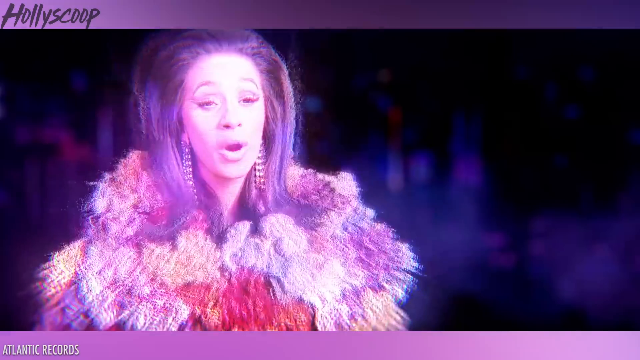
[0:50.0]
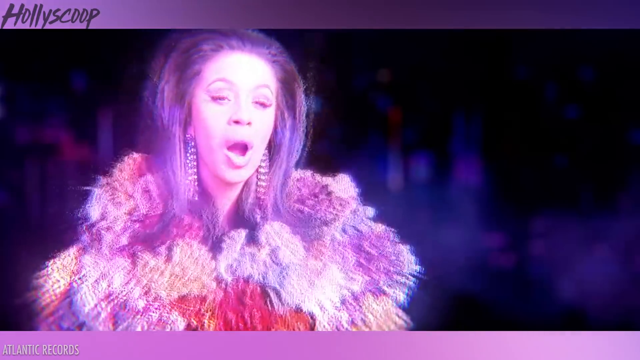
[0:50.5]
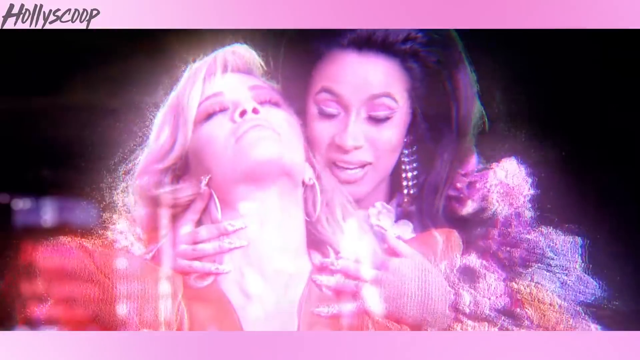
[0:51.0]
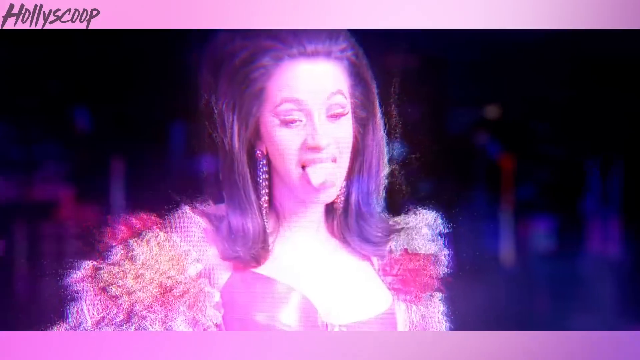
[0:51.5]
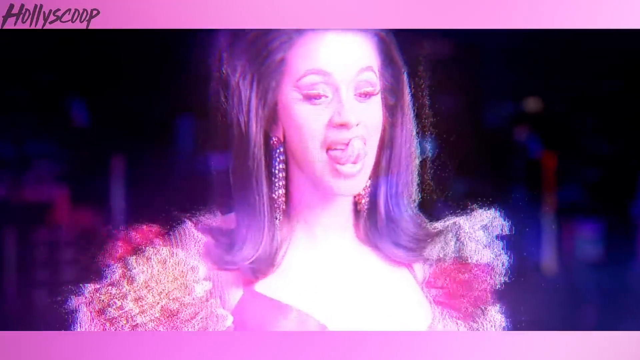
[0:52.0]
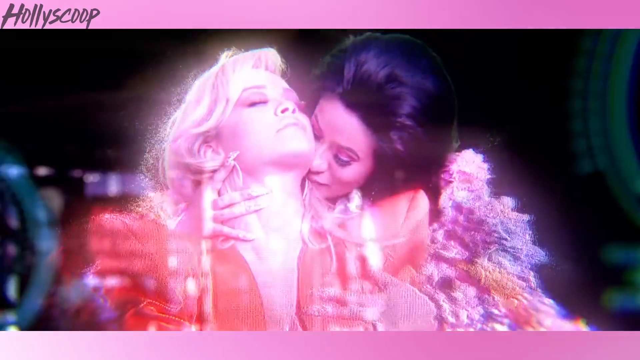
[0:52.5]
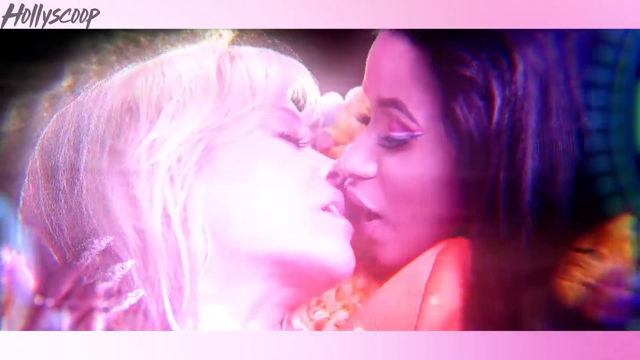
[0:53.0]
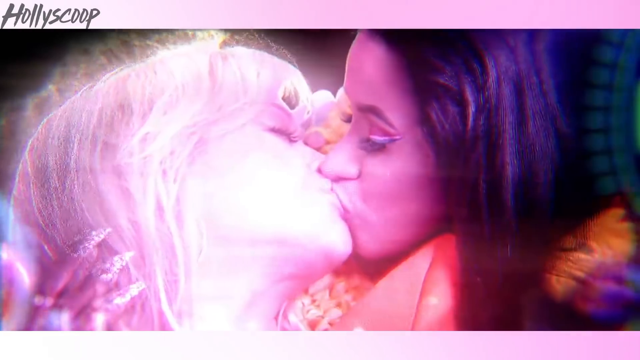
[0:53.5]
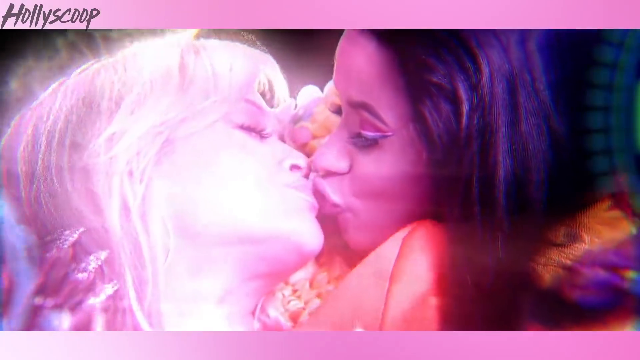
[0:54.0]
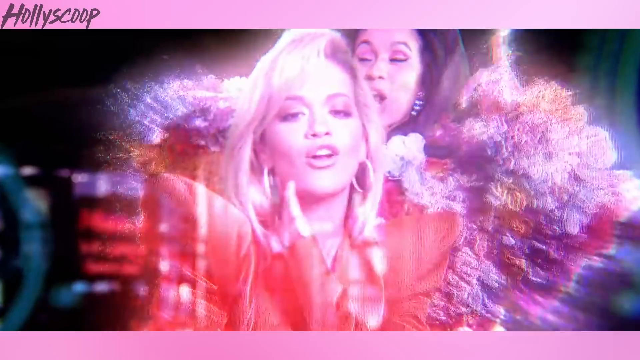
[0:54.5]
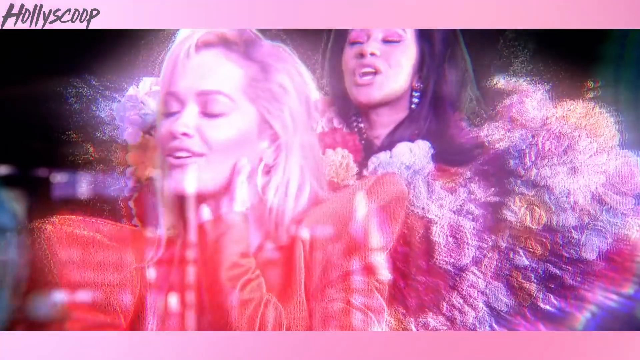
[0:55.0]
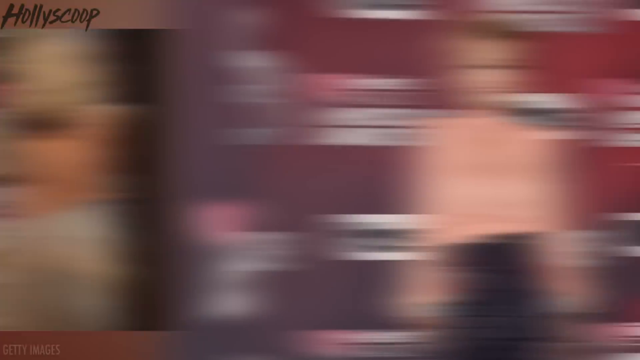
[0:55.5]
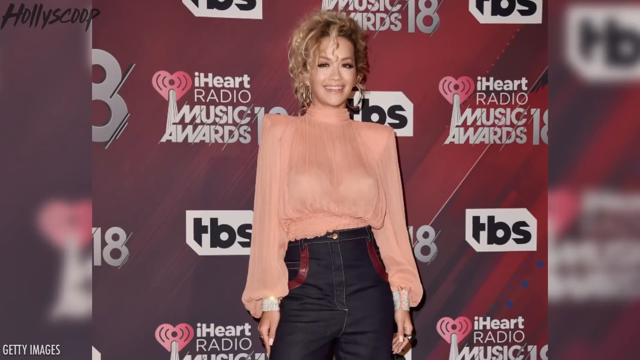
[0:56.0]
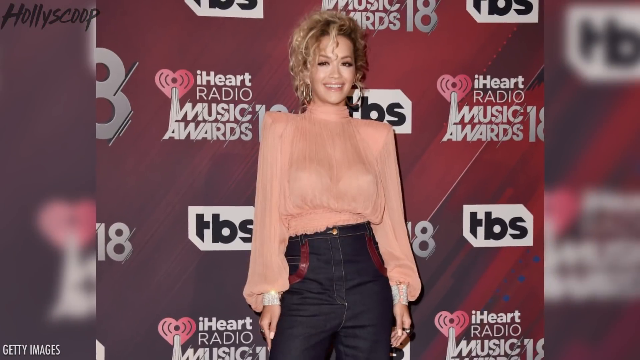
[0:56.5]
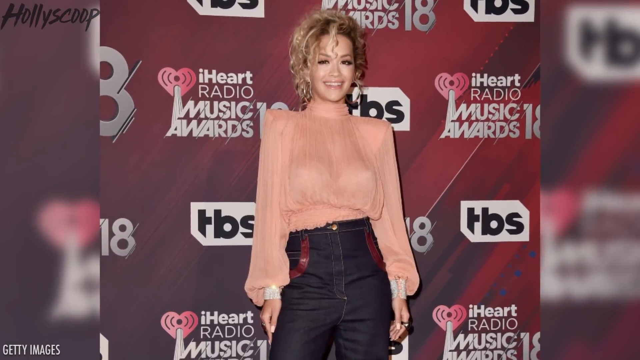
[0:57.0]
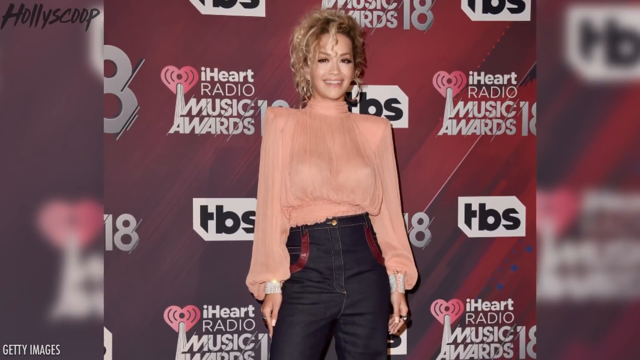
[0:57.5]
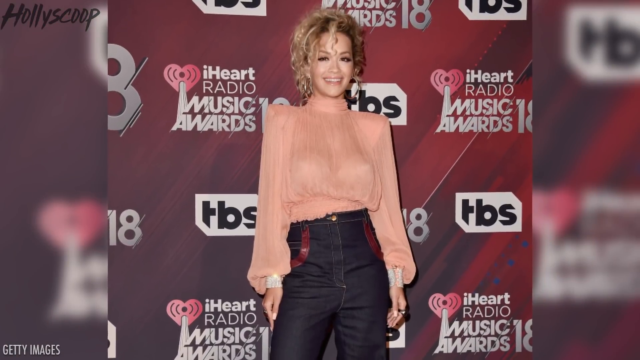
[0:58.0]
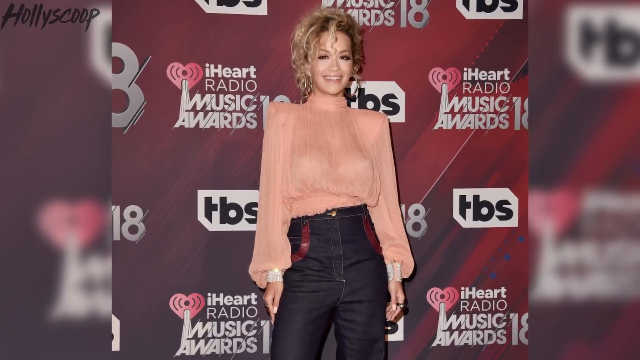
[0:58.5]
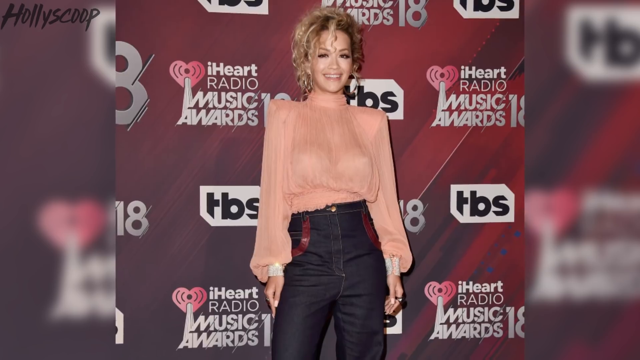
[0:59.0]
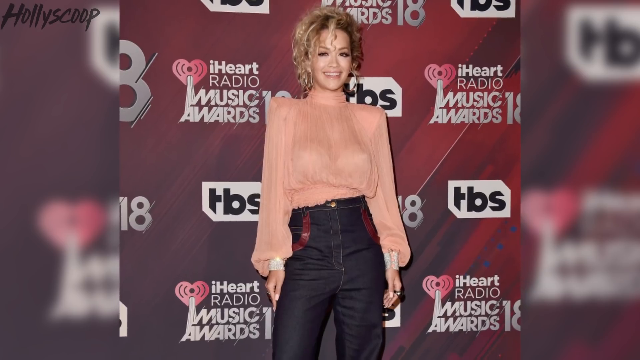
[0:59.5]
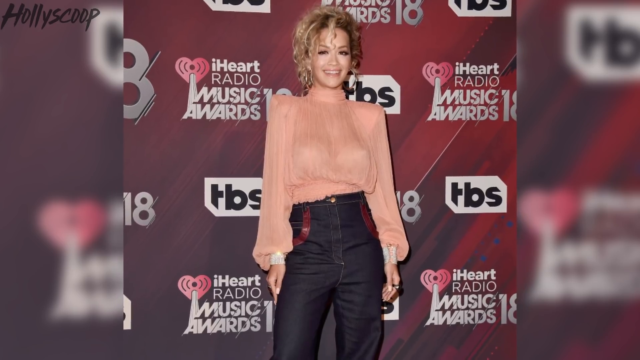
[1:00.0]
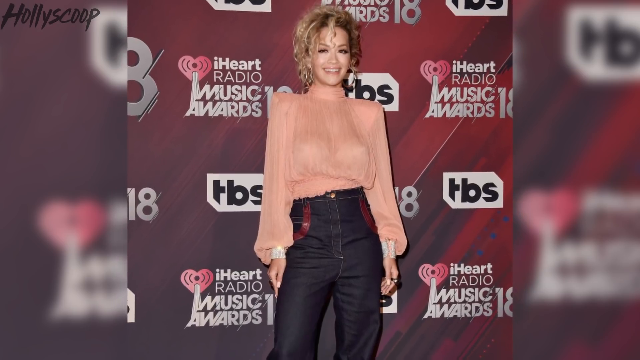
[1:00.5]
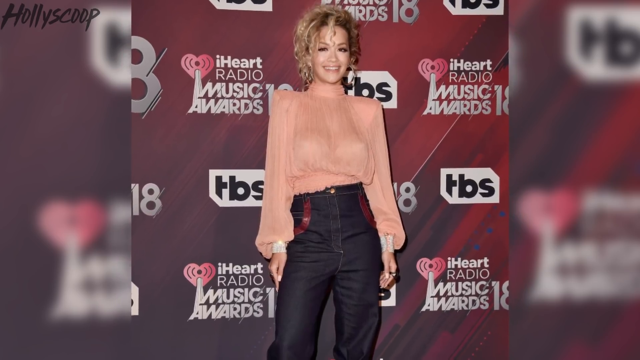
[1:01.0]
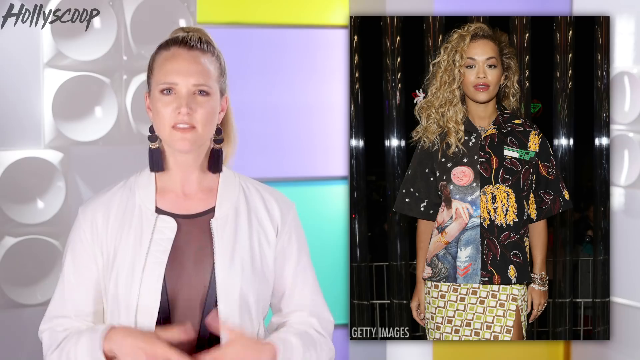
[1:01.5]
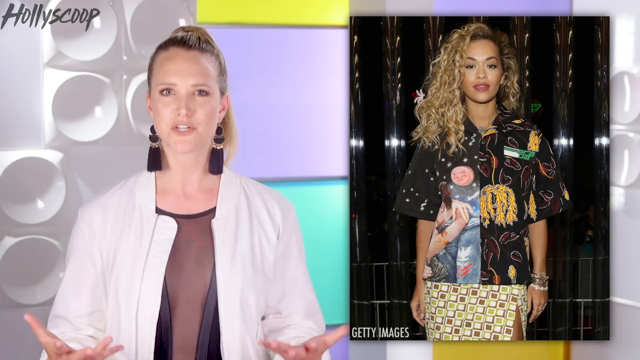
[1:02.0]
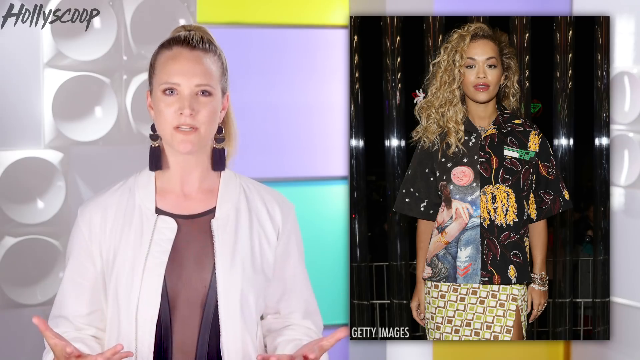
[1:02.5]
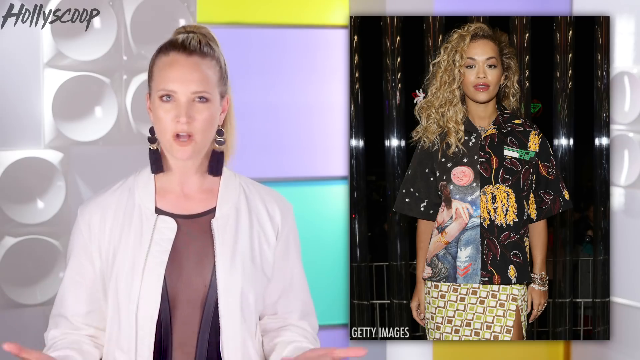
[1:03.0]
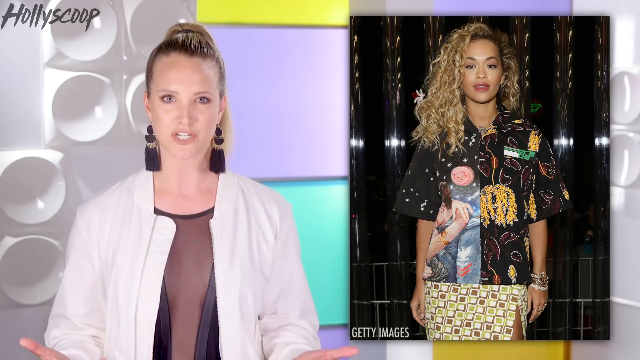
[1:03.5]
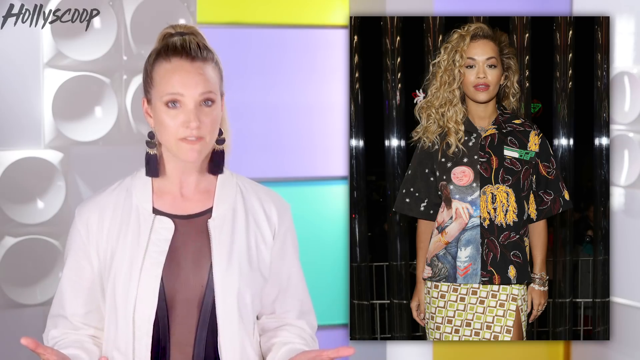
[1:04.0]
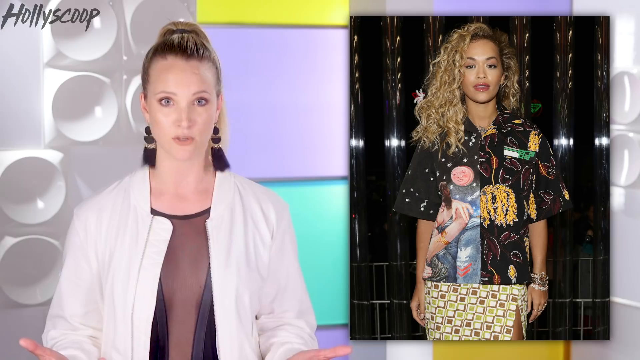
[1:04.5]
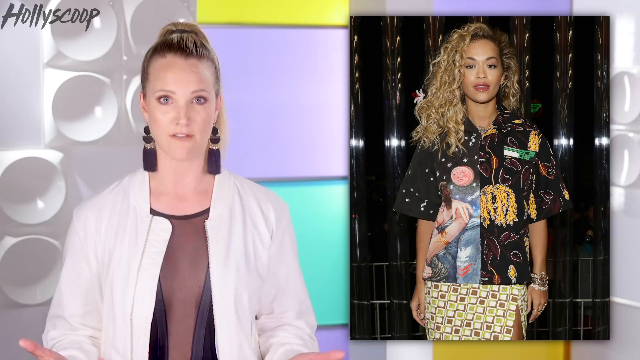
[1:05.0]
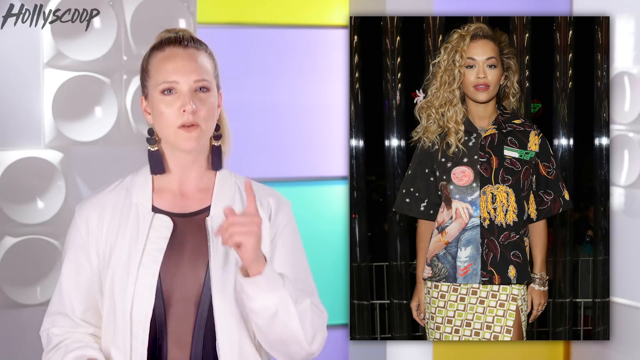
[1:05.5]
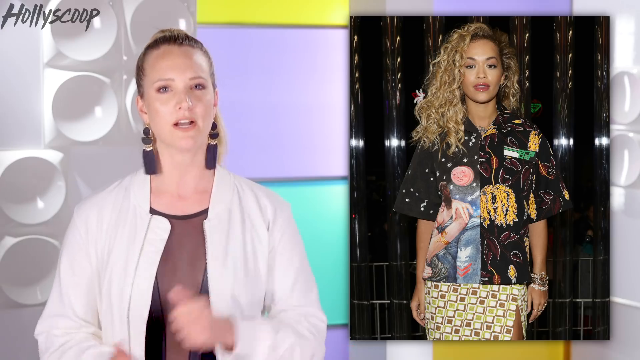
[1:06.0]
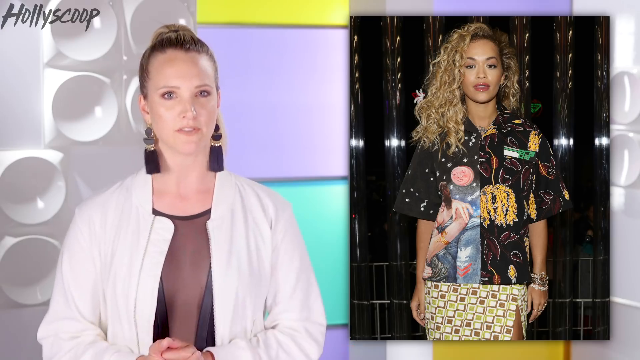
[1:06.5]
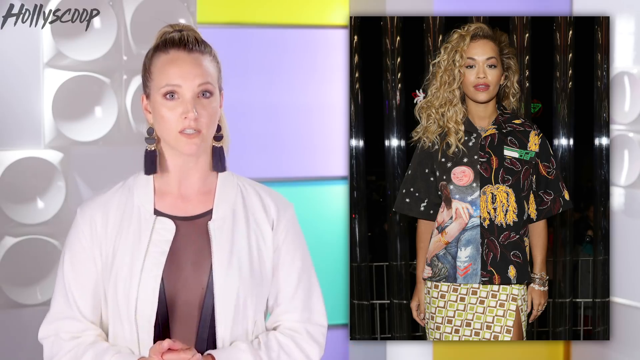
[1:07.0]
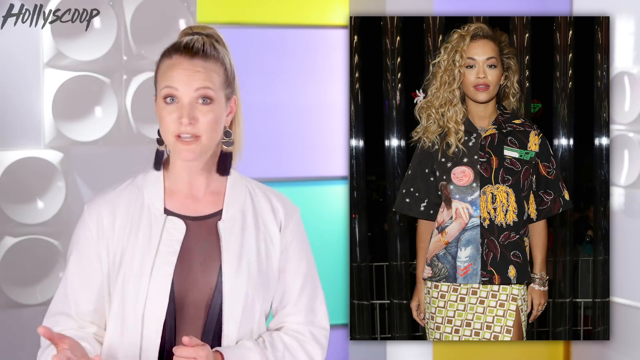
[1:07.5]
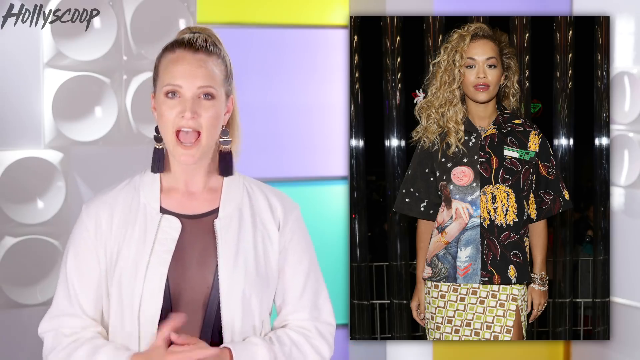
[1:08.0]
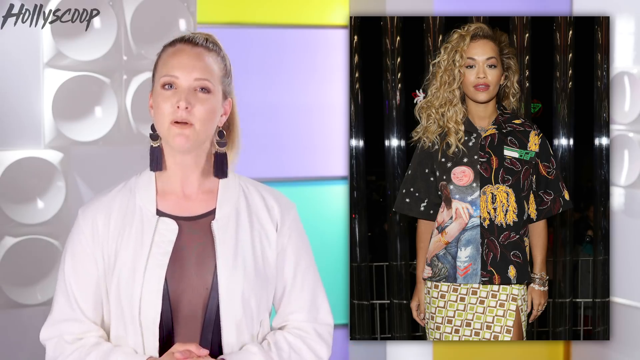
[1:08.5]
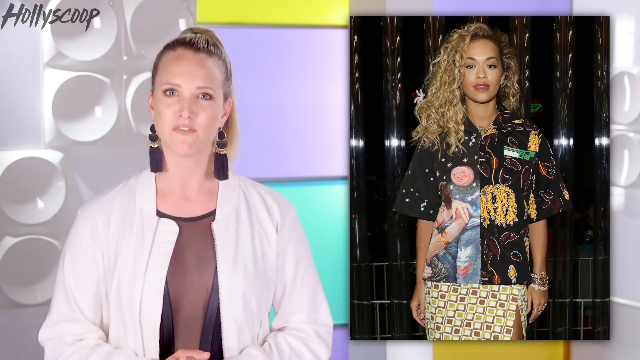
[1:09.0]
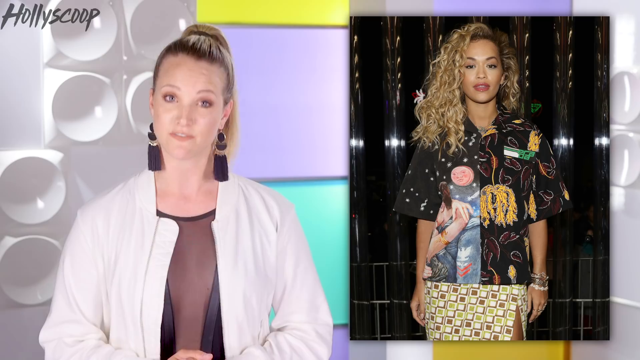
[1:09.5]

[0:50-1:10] Cardi B raps in a holographic effect, similar to Blade Runner-type holographics. Her fully furry outfit is very hard to discern because of the purple-pink holographic effect; she wears very long earrings, and her voluminous hair is almost like a mock 1950s-housewife style. A short shot shows Cardi B holding Rita Ora with her hands wrapped around her, one hand on her neck, while Rita Ora closes her eyes and leans back; Cardi B has quite long fingernails. It cuts to Cardi B licking with her tongue, then to Rita Ora and Cardi B embracing, then to the two of them in a close-up kiss, and then to them singing together and bouncing around, with only their upper bodies visible. Next, a still image of Rita Ora slowly zooms out to show her full outfit; she is on the red carpet of the iHeartRadio Music Awards, with the iHeartRadio logo in the background graphic and the words "iHeartRadio Music Awards" behind it. It is the 18th awards. The video cuts to the blonde host with her hair pulled back, talking adamantly and briefly pointing her index finger at the screen for emphasis.